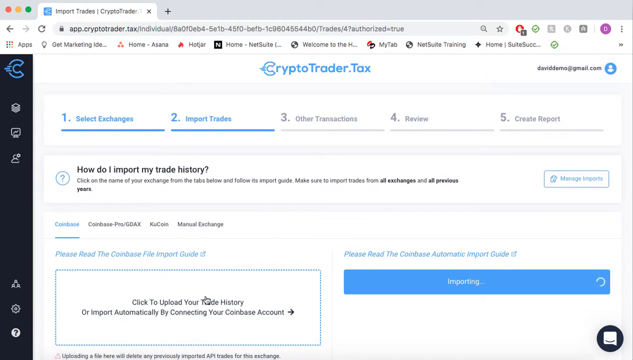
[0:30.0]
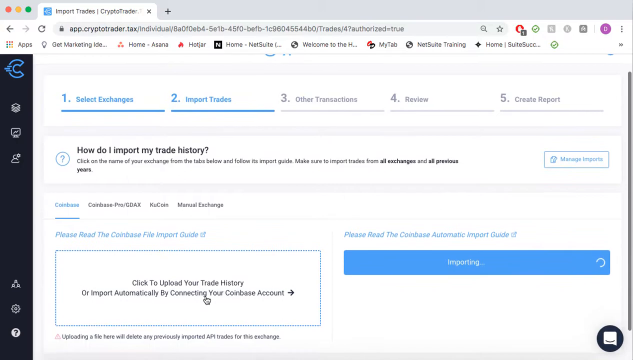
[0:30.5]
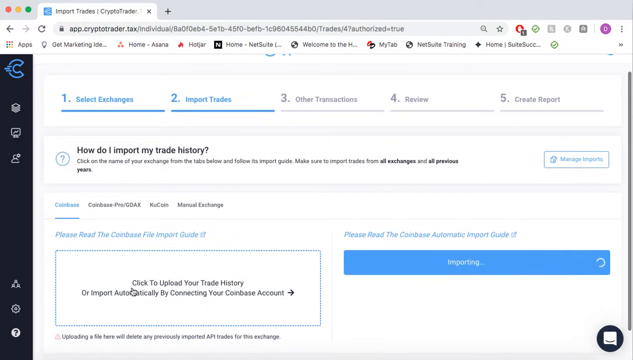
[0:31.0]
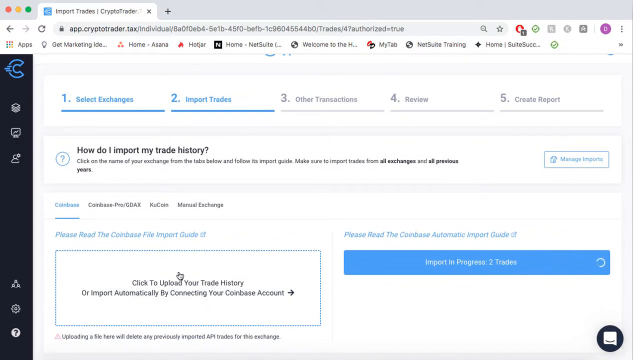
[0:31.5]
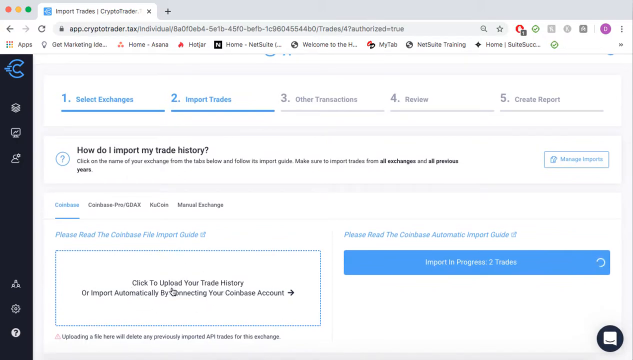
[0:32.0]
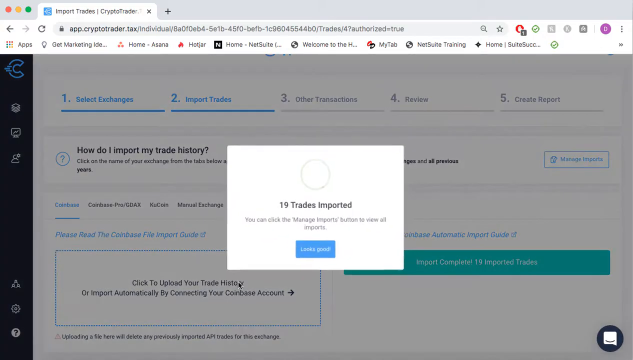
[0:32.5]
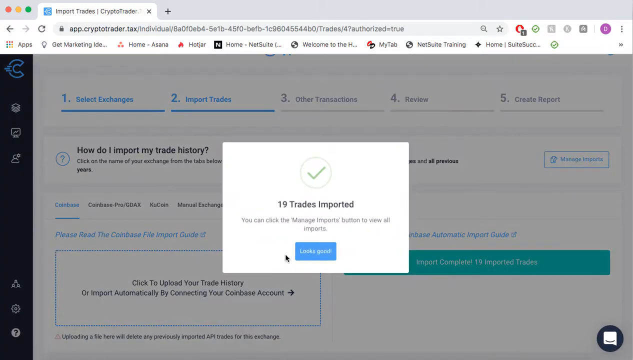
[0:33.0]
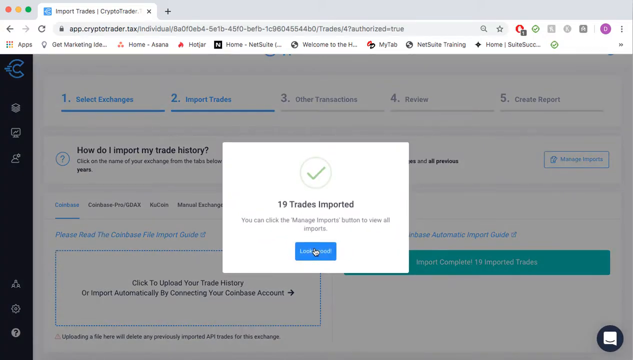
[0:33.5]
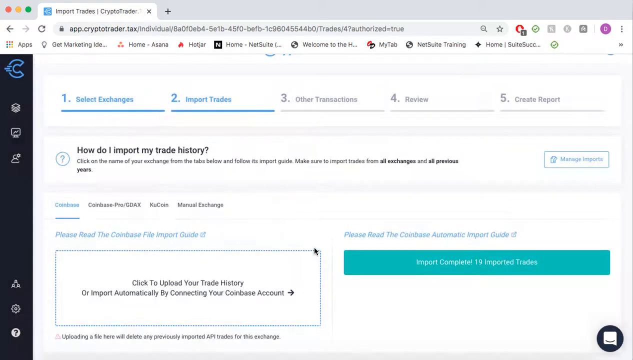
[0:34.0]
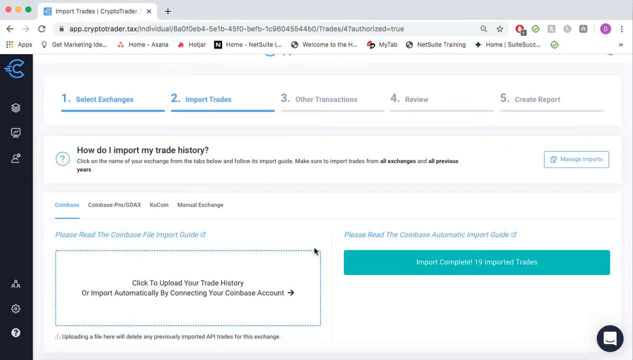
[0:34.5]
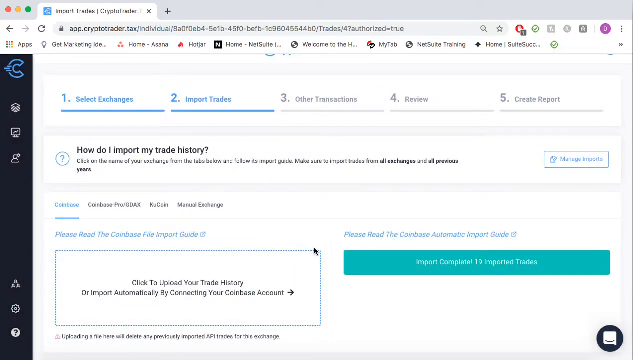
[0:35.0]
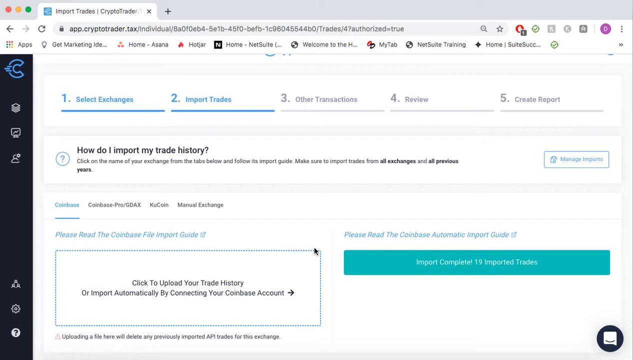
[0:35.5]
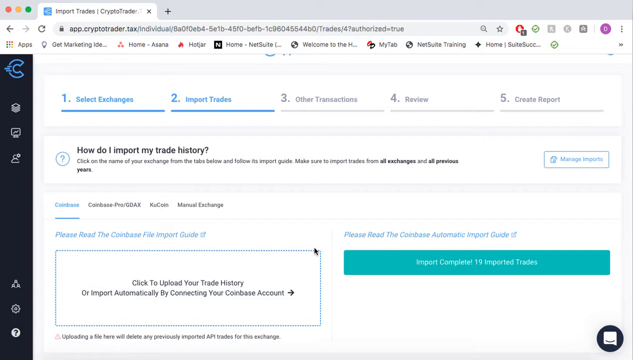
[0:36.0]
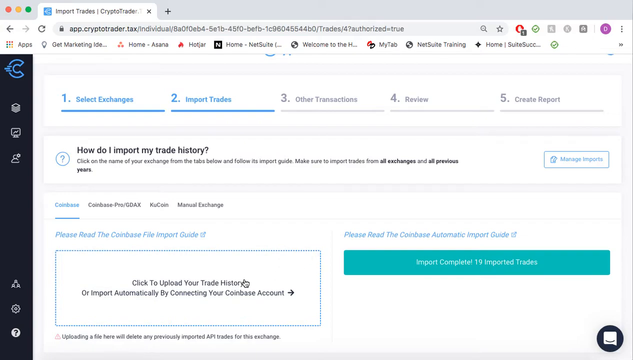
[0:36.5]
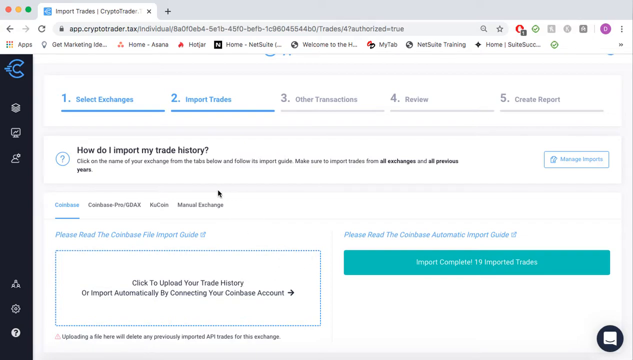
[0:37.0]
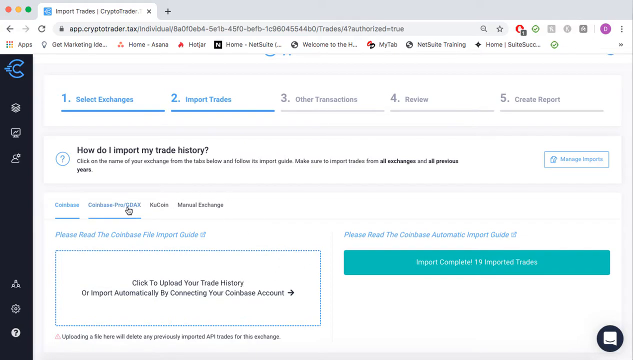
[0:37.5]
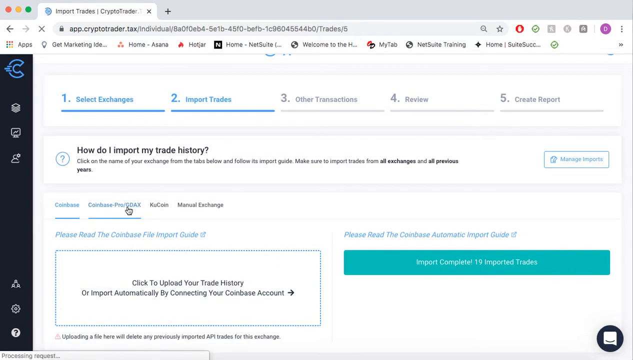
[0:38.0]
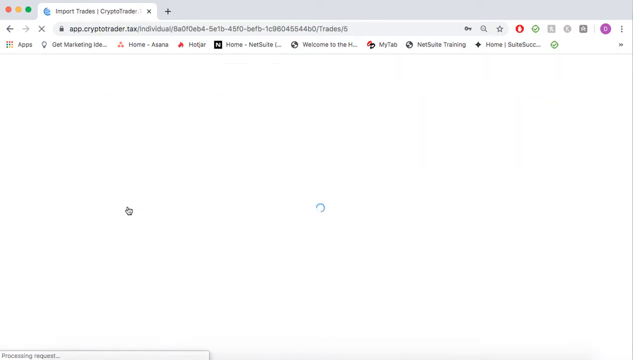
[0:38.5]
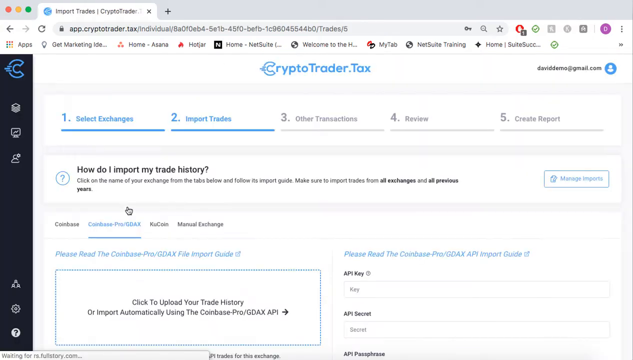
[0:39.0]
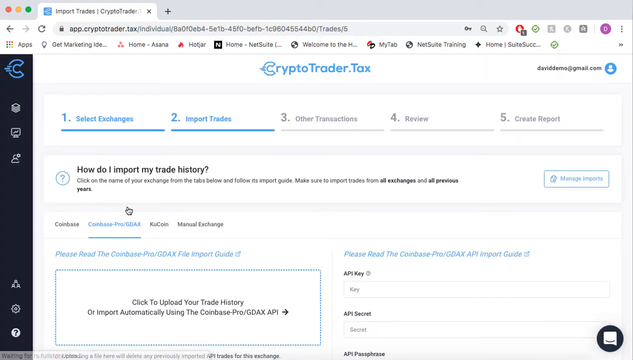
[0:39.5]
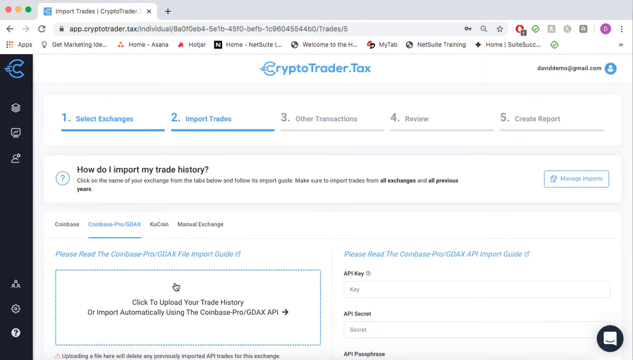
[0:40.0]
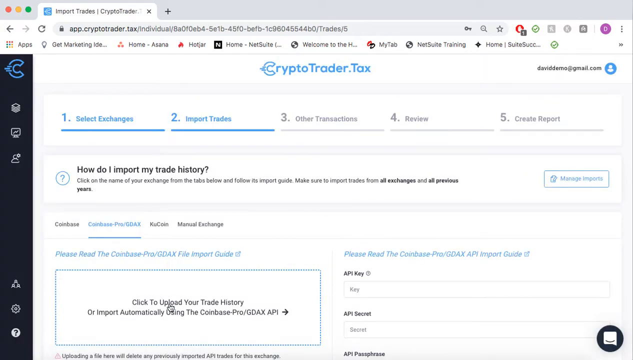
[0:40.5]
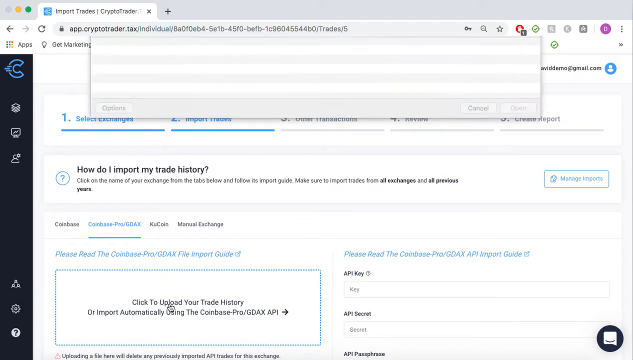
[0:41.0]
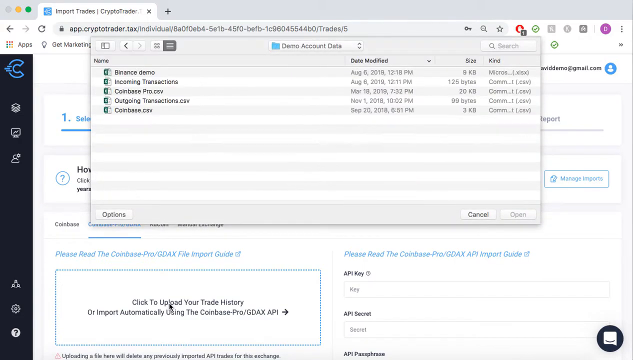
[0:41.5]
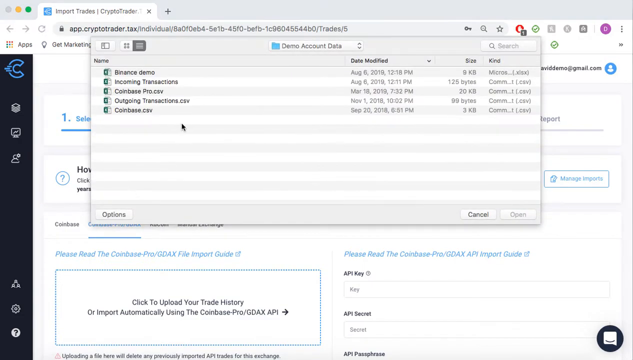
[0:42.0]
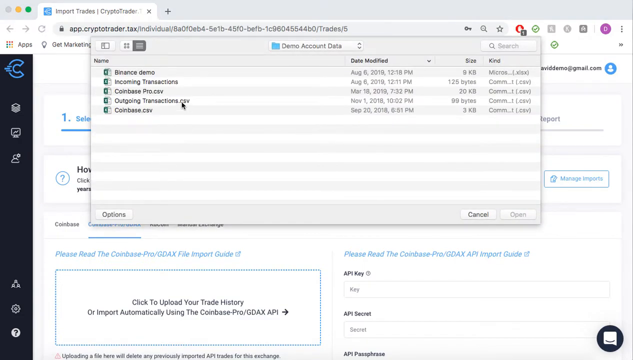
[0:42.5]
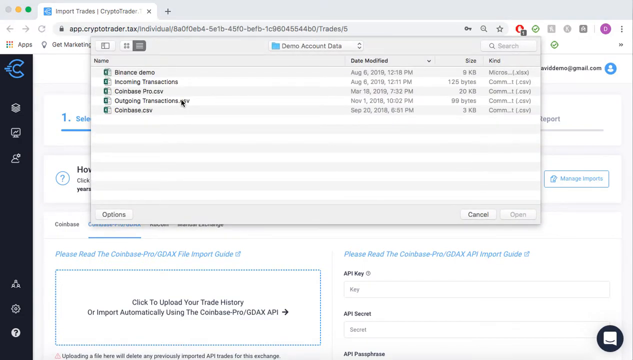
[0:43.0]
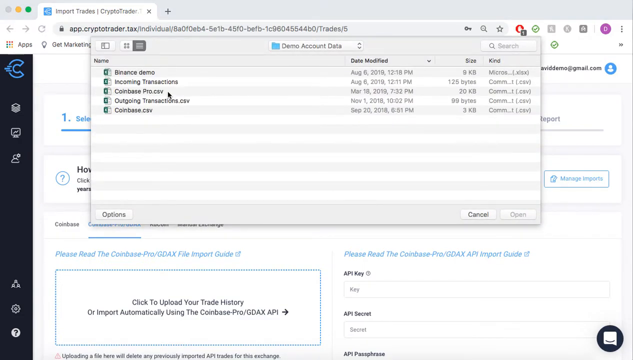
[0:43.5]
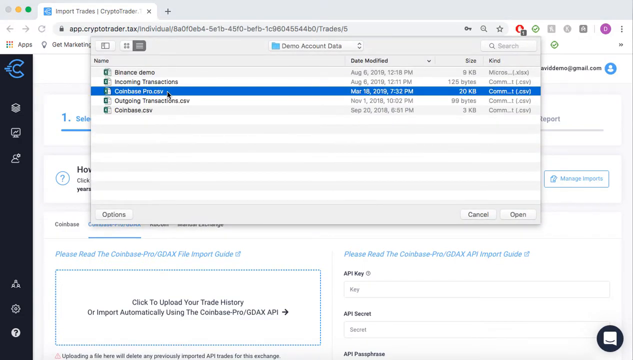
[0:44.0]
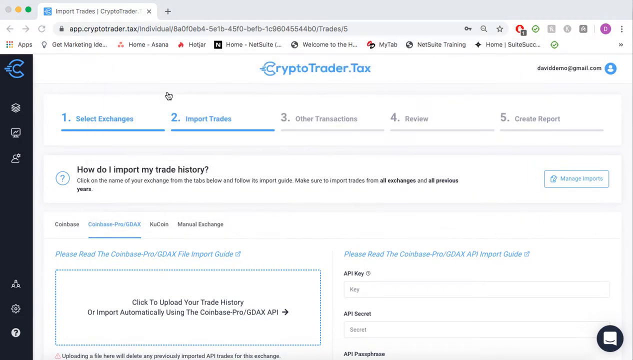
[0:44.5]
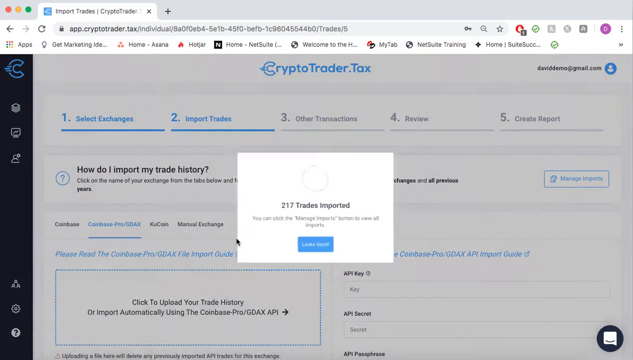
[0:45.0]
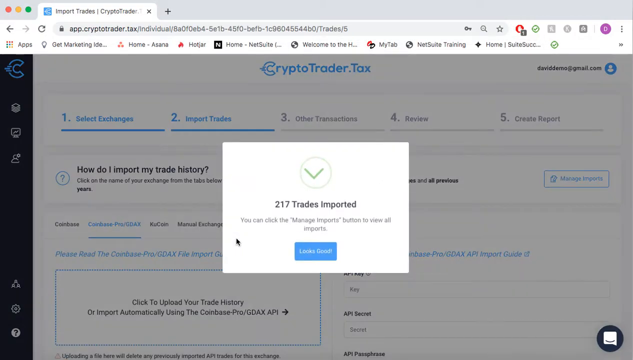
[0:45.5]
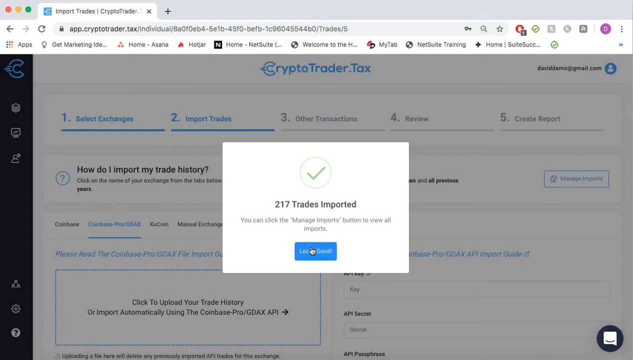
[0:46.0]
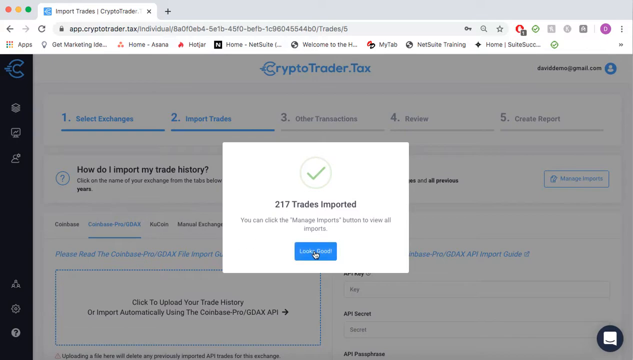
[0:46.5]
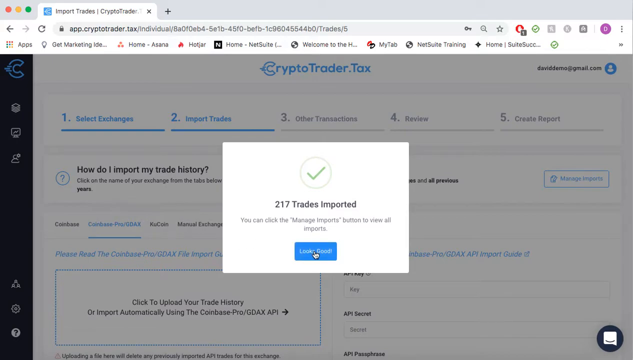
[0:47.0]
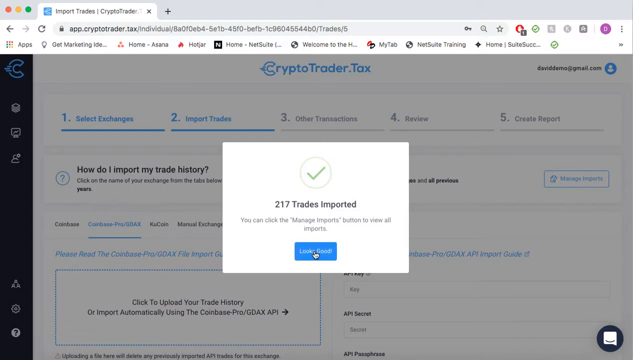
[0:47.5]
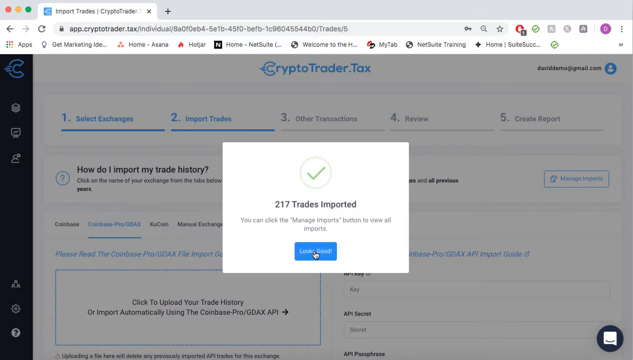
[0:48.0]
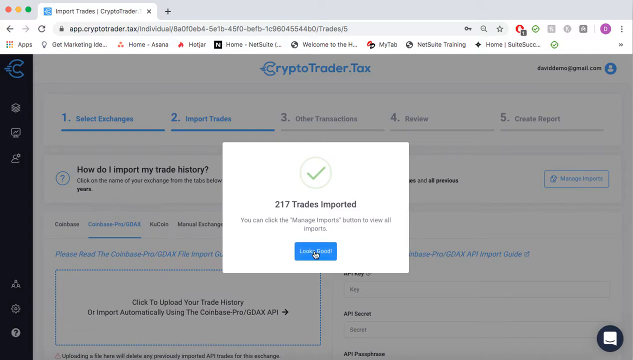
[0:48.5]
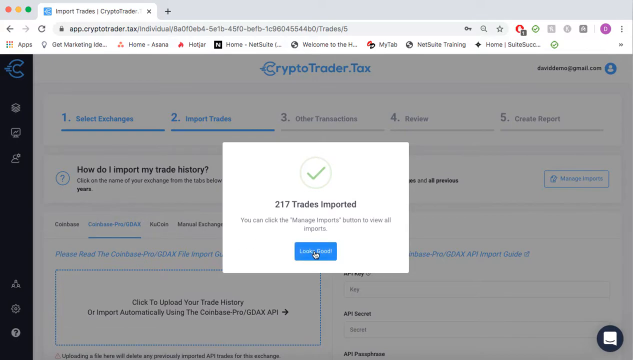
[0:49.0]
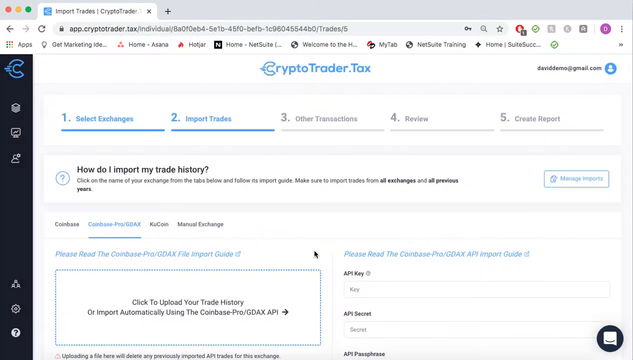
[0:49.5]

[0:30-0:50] After the user clicks "Import", the screen says "19 trades imported" and a pop-up appears indicating the import was successful. For this Coinbase import, the step of selecting a file does not appear; the user just clicks the button and the import is shown as successful. The user then goes to the Coinbase Pro section, which contains more information to fill in. The user fills it in; the file explorer opens, apparently on a Mac, and a file is selected to import, resulting in another 217 imported trades. After this, the user performs no further imports.